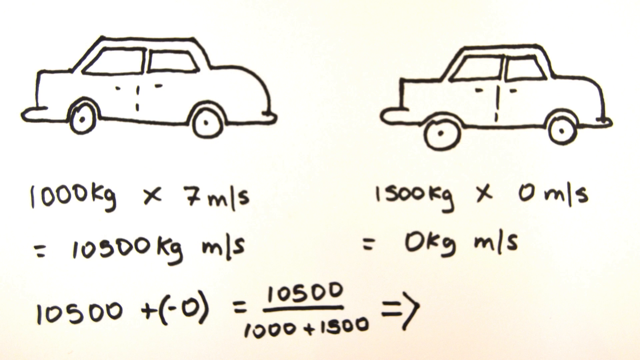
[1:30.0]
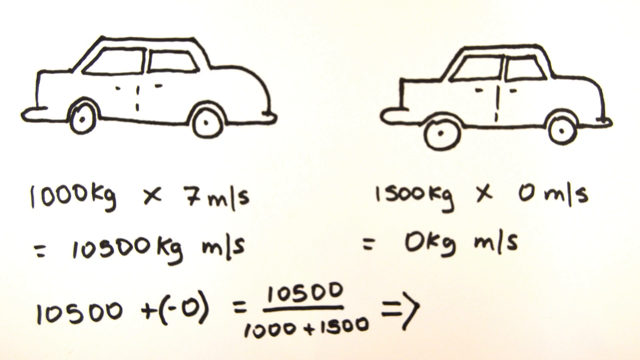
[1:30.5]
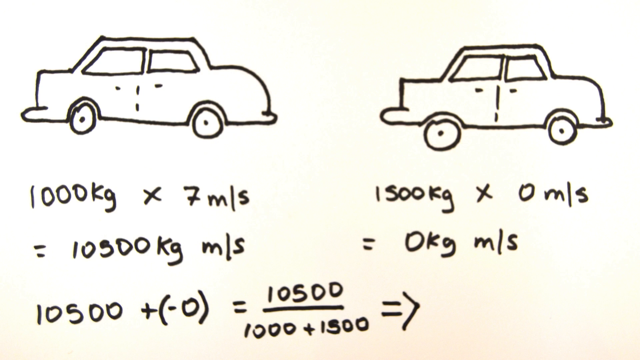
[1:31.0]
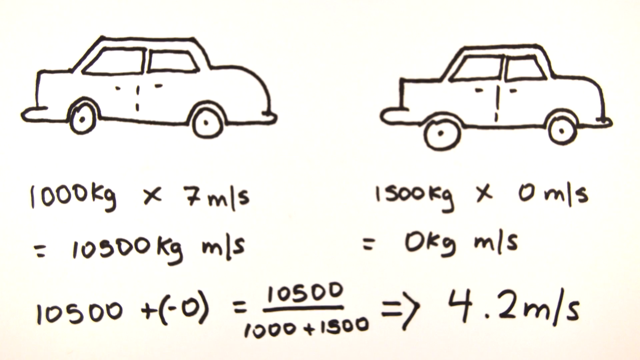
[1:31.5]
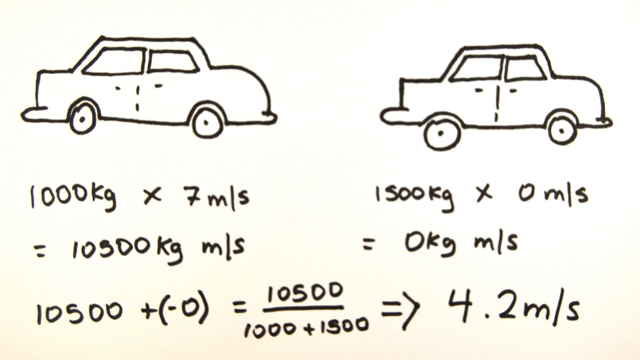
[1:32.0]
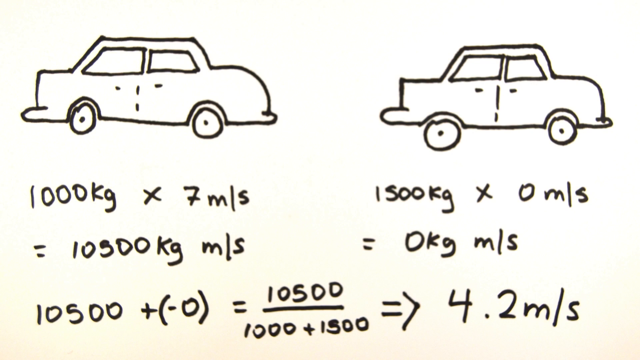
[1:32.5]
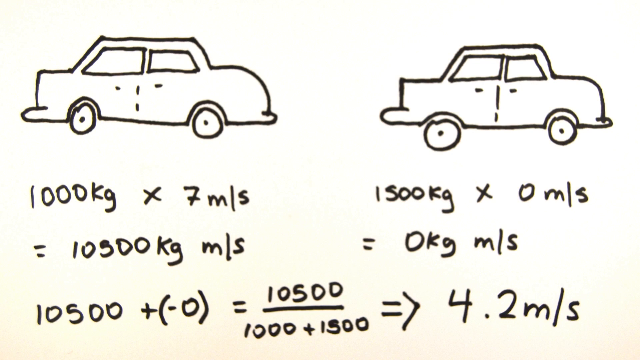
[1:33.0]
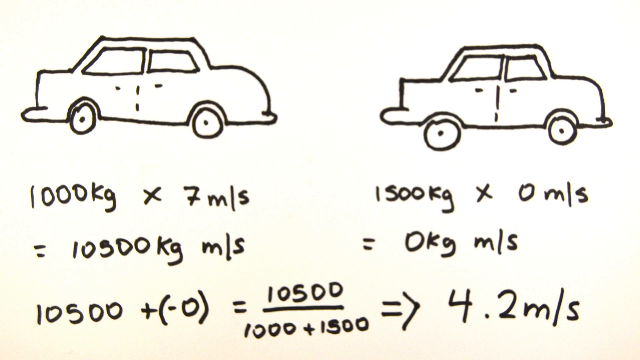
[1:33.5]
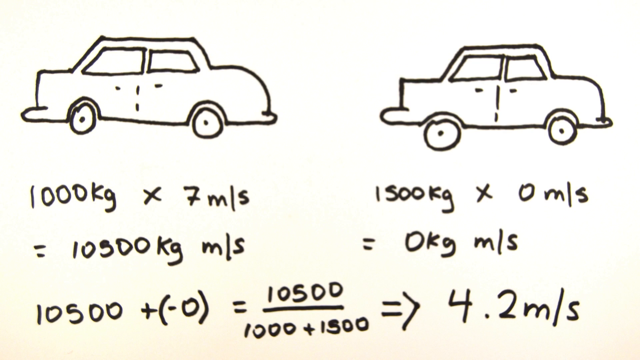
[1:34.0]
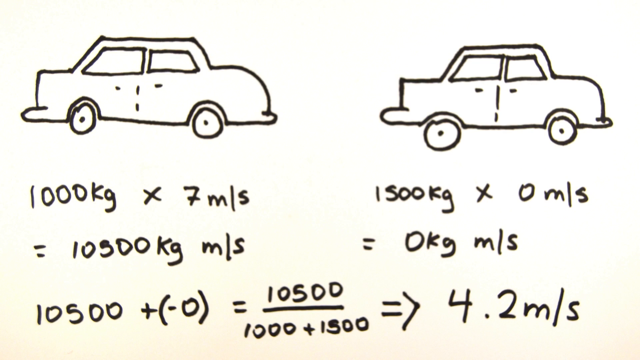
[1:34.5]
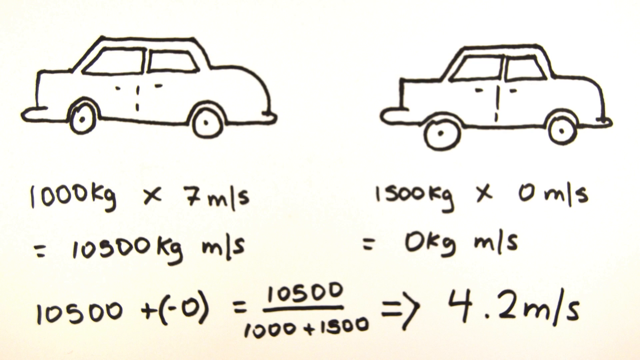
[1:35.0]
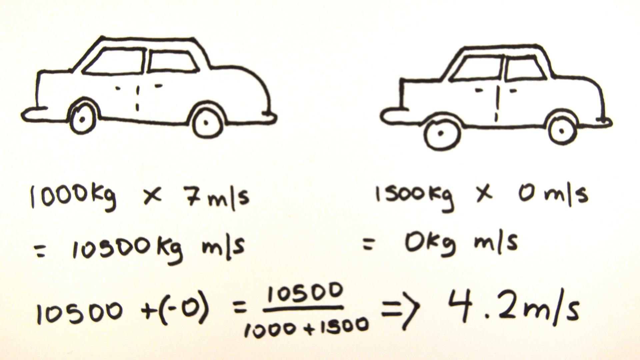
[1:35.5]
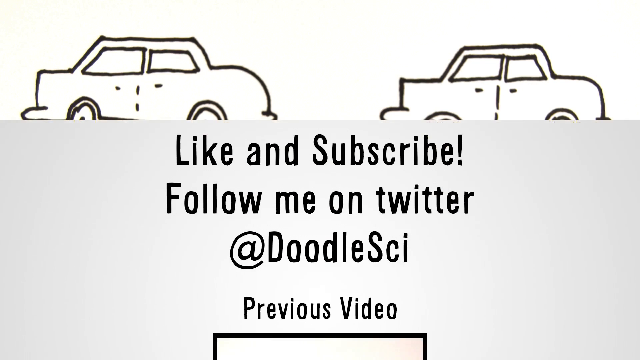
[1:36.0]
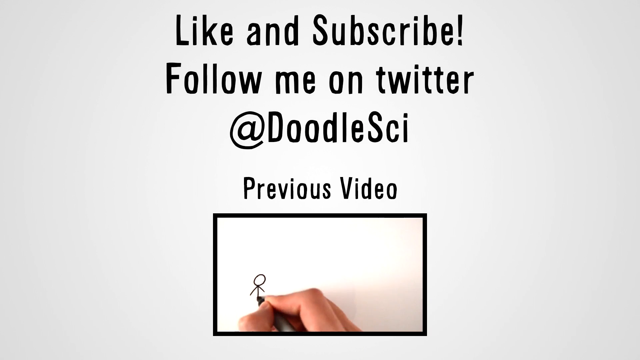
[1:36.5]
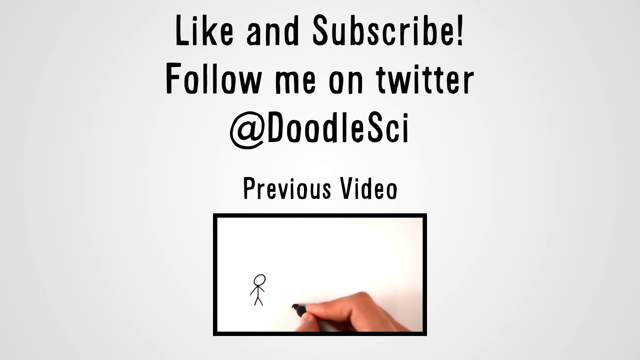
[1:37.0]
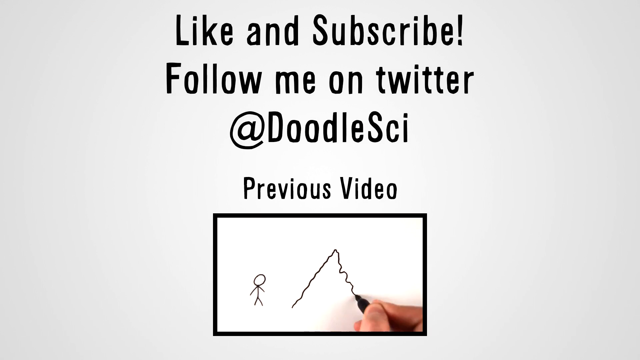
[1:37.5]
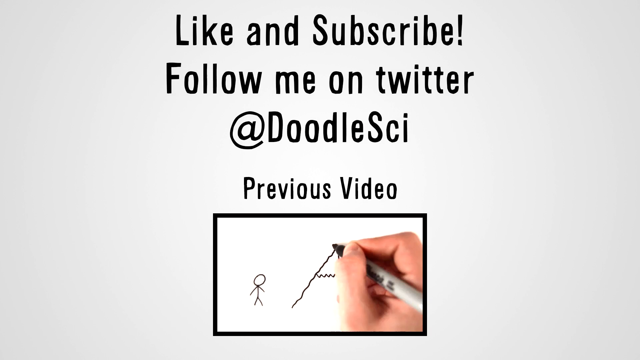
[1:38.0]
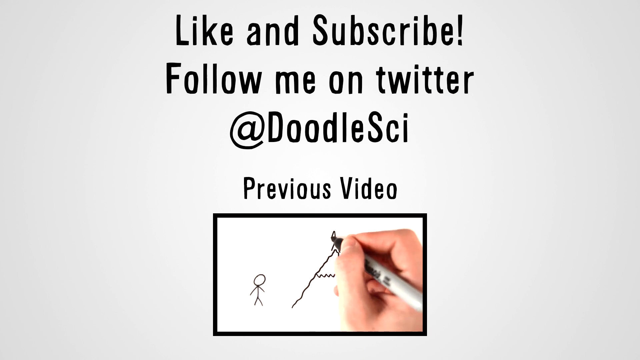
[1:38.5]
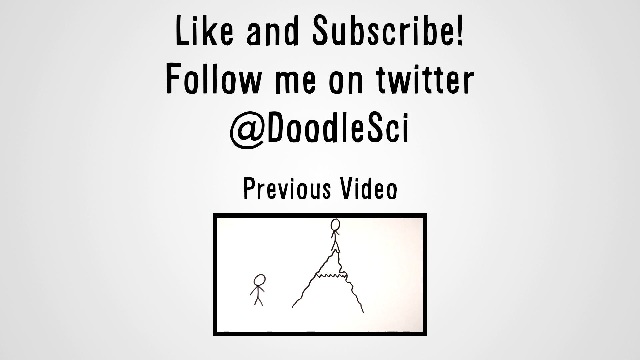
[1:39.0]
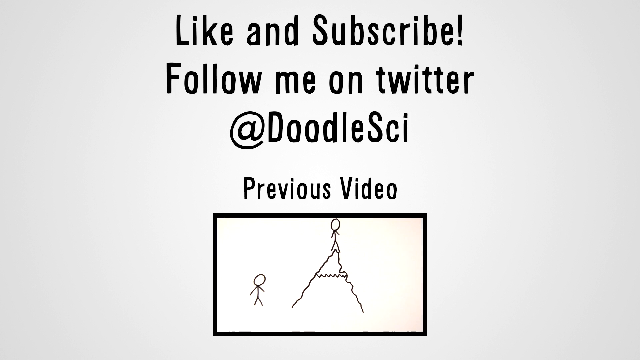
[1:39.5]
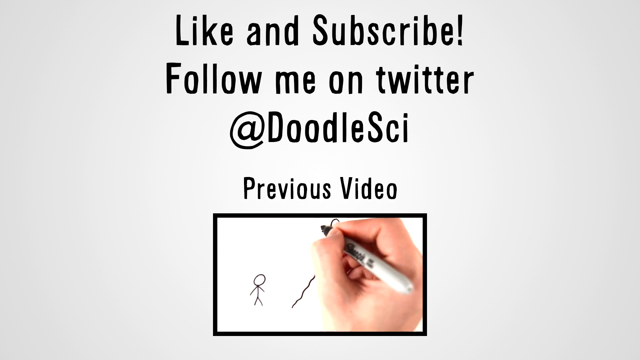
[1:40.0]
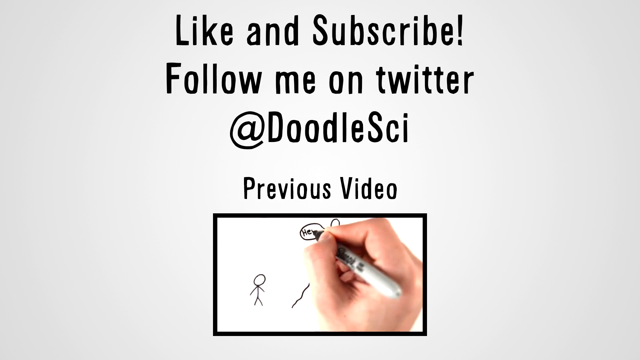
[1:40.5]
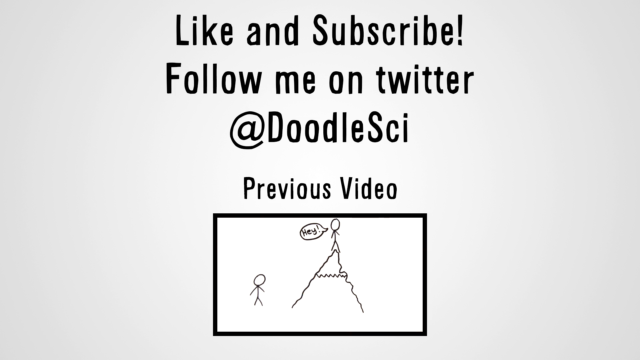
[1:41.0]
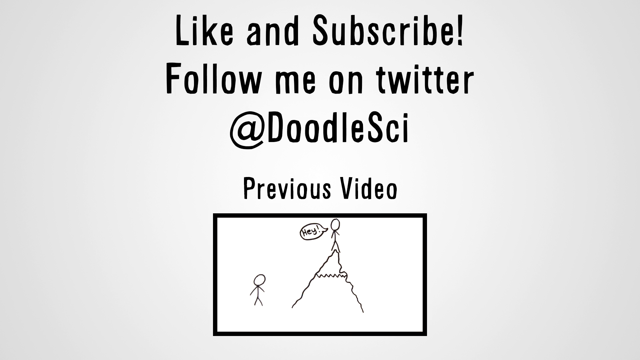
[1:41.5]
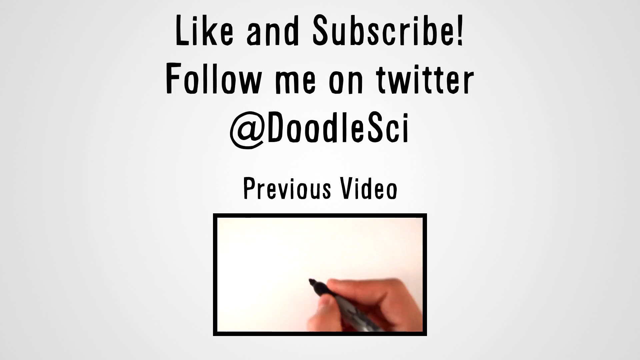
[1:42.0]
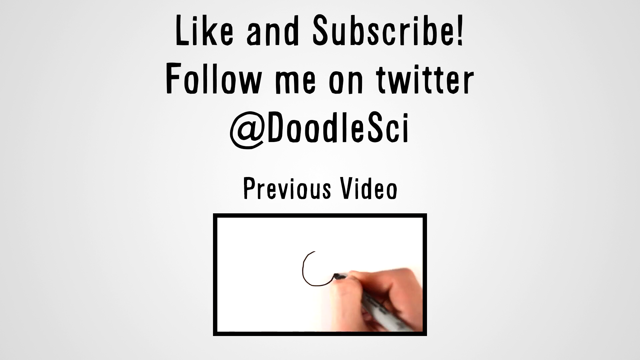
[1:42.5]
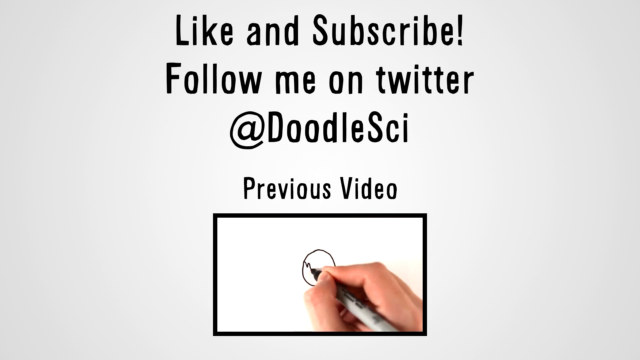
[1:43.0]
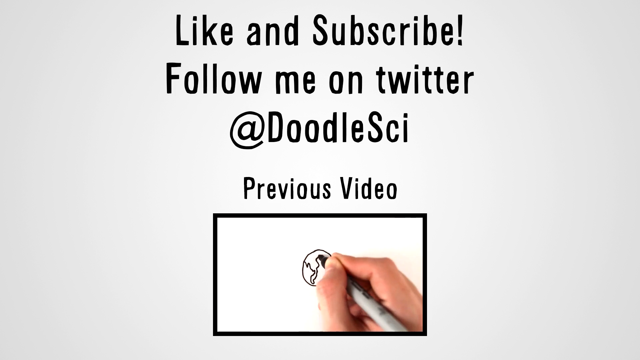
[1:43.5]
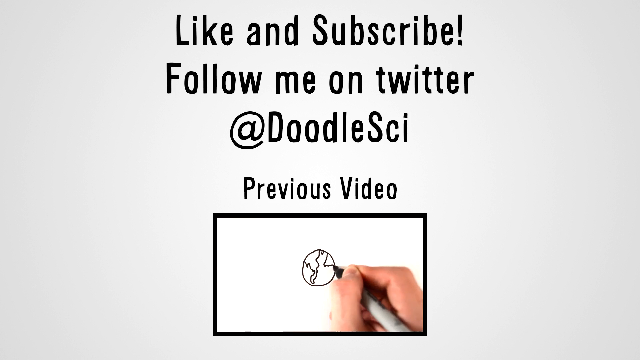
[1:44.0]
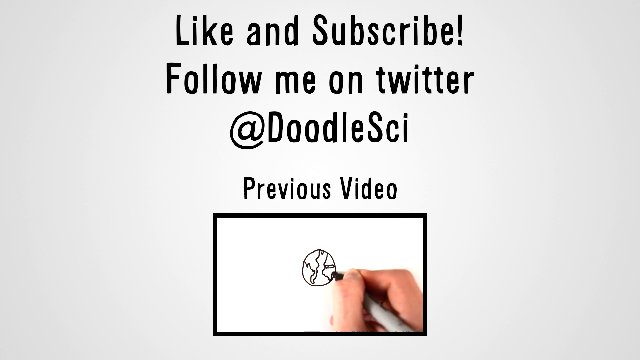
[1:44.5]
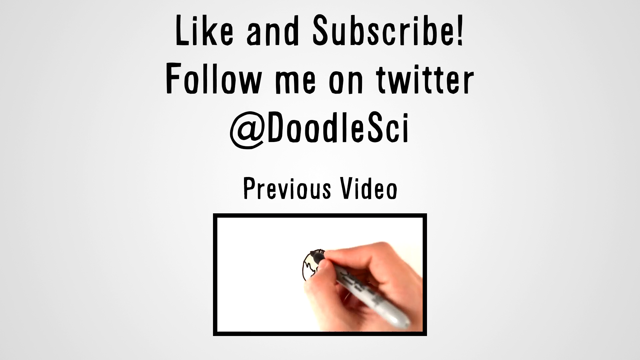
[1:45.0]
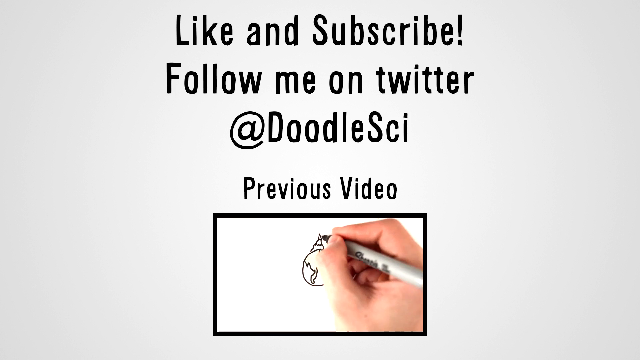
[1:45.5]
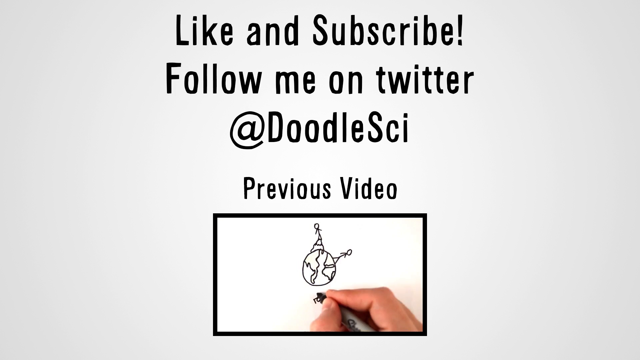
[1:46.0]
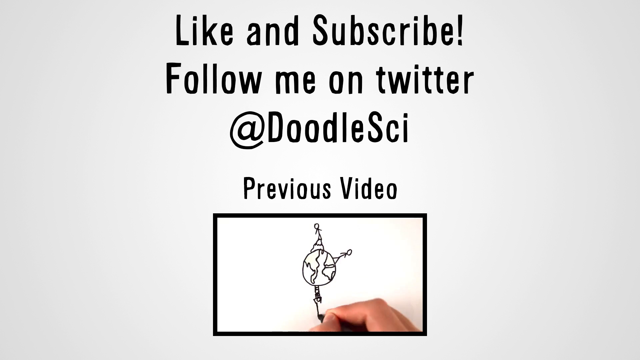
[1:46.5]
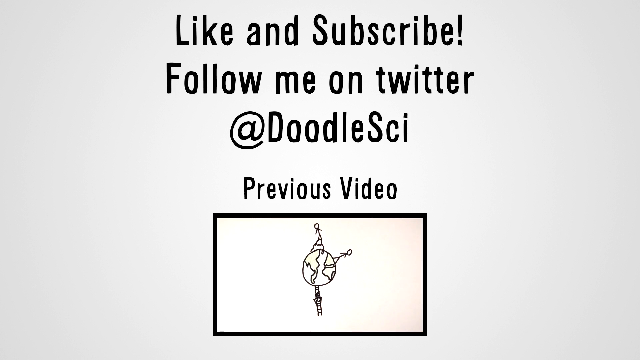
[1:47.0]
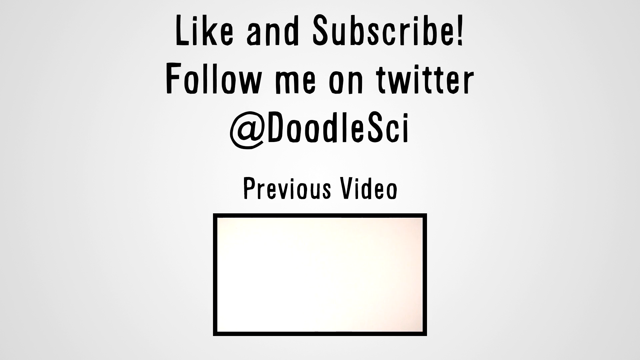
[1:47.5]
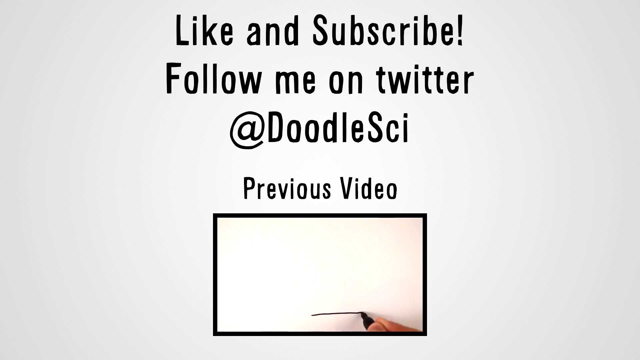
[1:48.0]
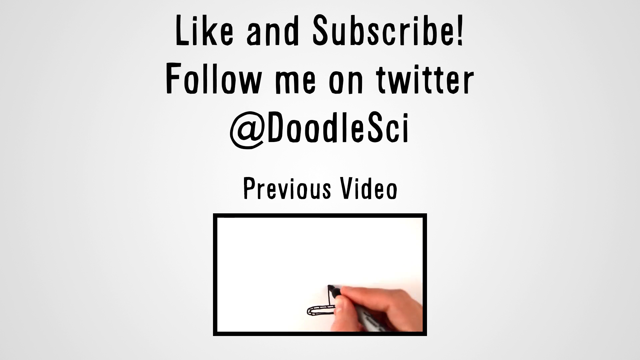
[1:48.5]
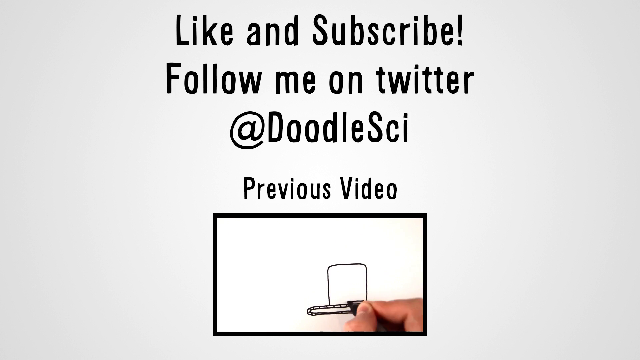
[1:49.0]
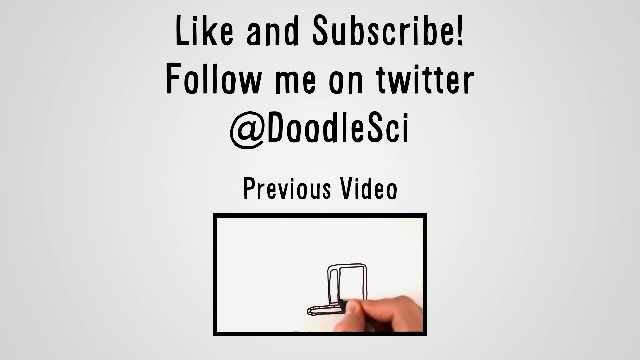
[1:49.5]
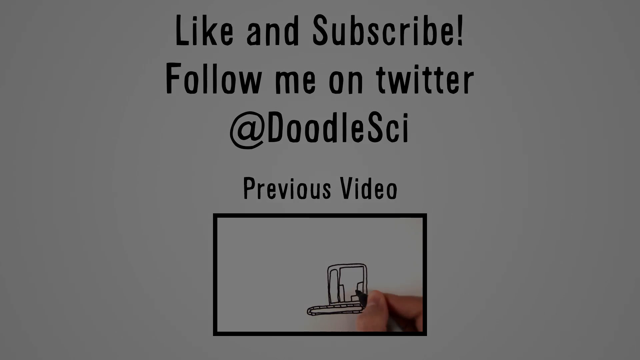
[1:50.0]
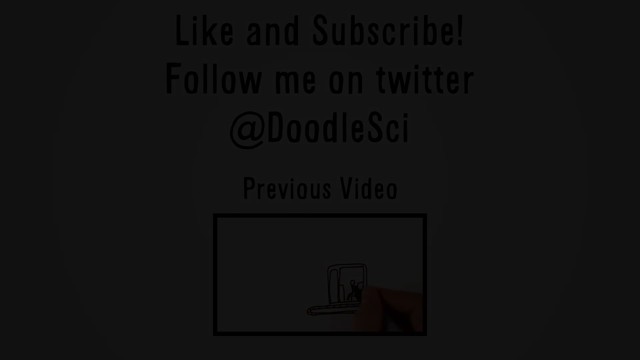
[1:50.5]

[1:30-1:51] Two cars are shown, one at the top on the left and the other at the top on the right. On the left side it says "1000 kg × 7 m/s", apparently with an equals sign and "10,500 kg m/s", then "10,500 +" with "(-0)" in parentheses, "= 10,500" and "1,000 + 1,500", with an arrow pointing toward the right side. By the other car it says "1,500 kg × 0 m/s = 0 kg m/s", and then "4.2 m/s". That disappears, and text says "like and subscribe!" and "follow me on twitter" with the handle d-o-o-d-l-e-s-i. Text then apparently says "previous video", with the person drawing what looks like a volcano with the sun.